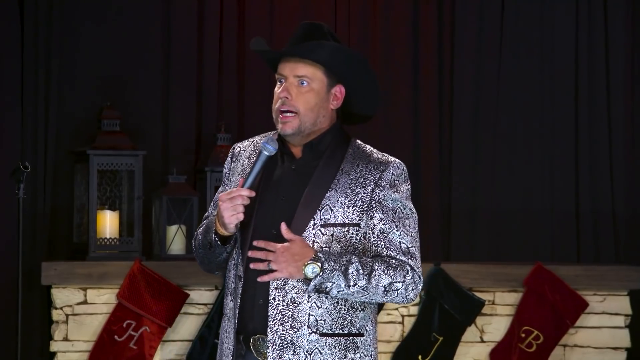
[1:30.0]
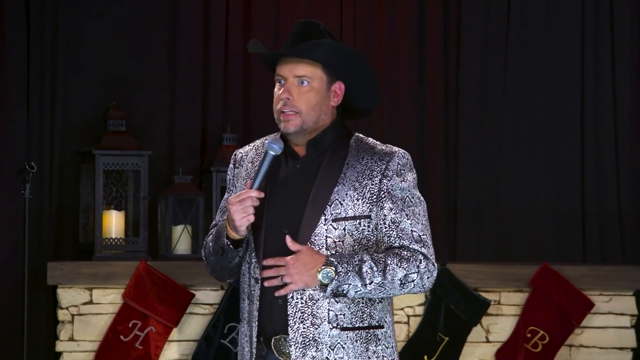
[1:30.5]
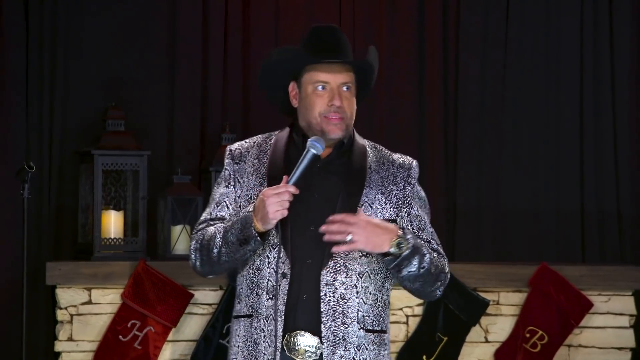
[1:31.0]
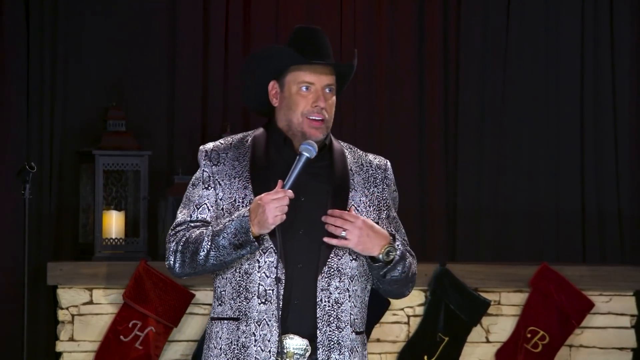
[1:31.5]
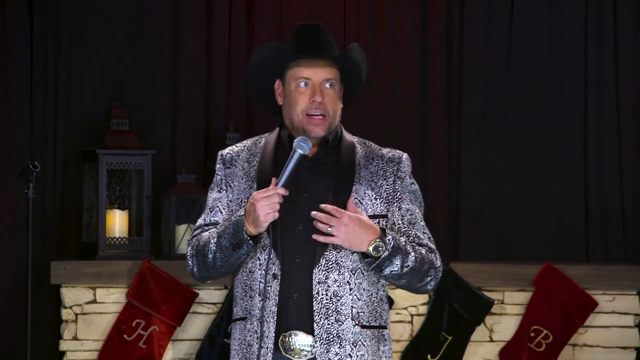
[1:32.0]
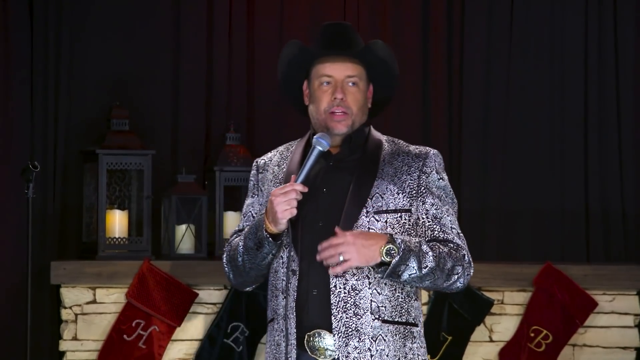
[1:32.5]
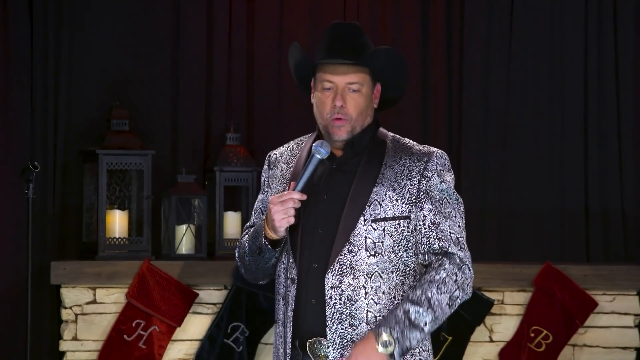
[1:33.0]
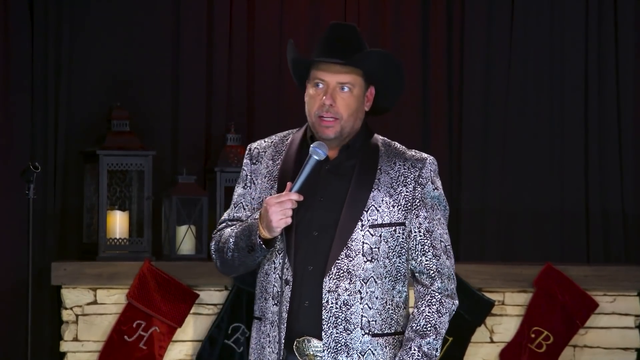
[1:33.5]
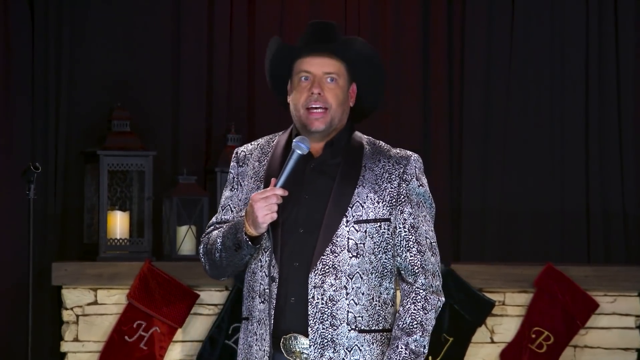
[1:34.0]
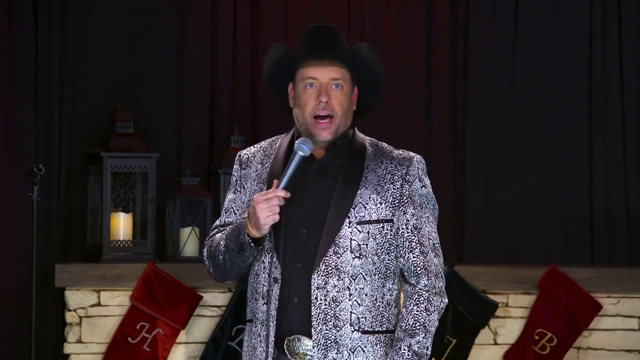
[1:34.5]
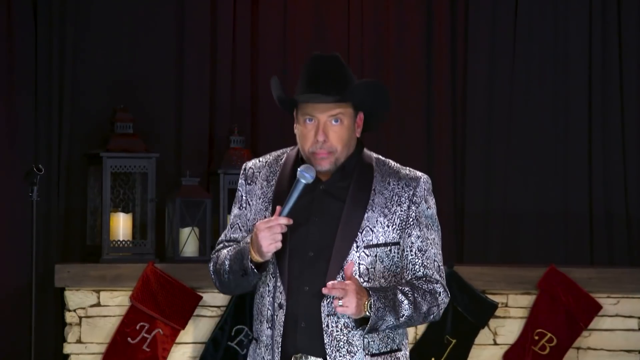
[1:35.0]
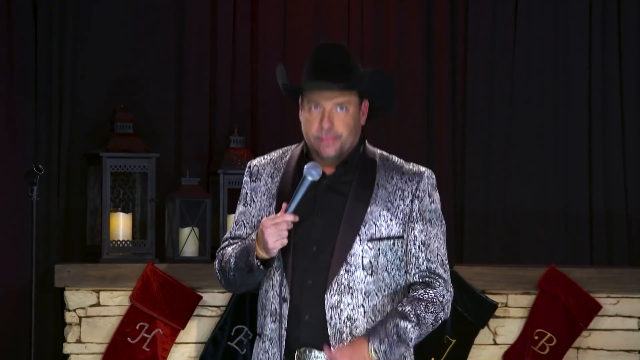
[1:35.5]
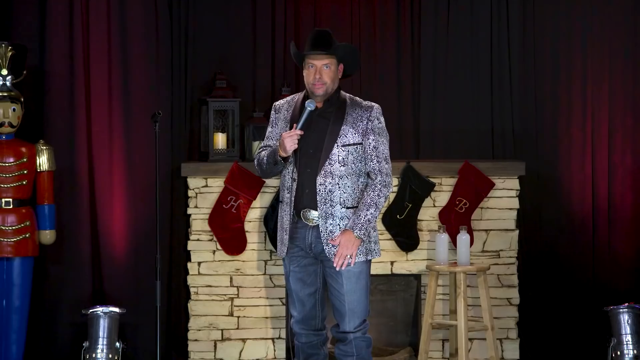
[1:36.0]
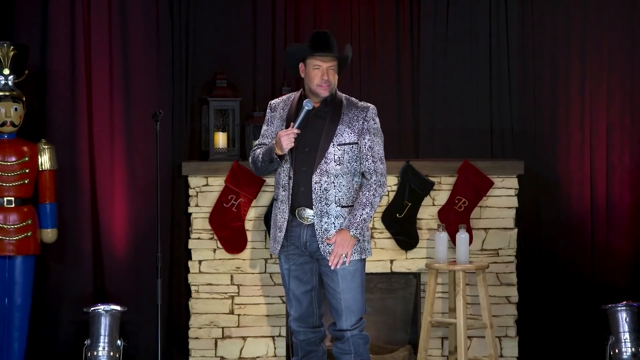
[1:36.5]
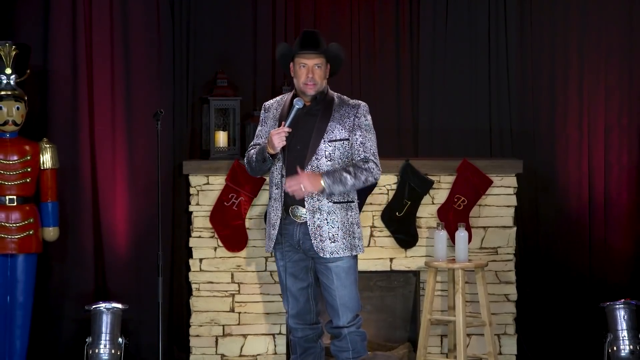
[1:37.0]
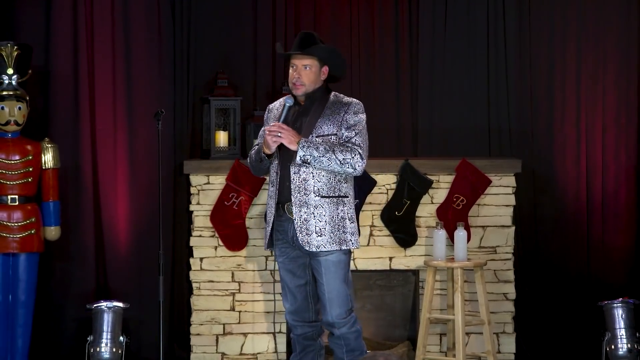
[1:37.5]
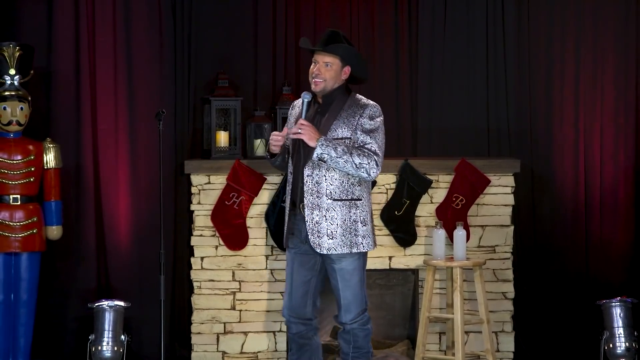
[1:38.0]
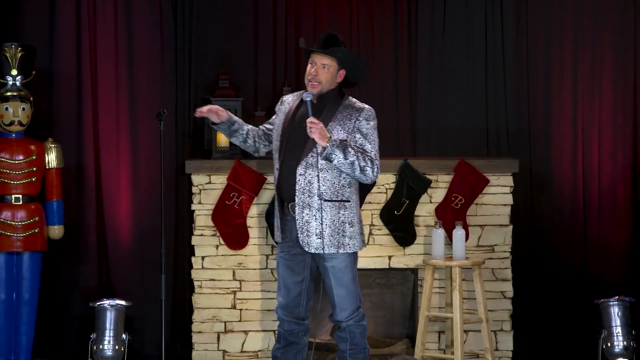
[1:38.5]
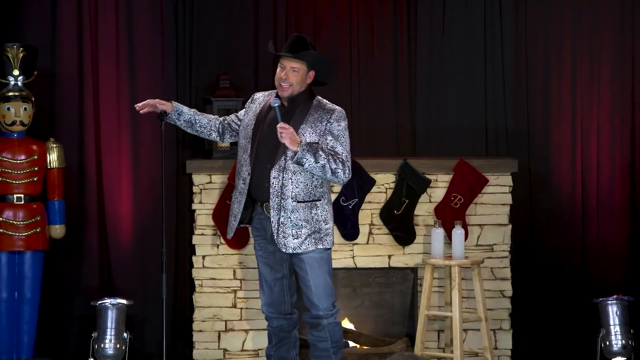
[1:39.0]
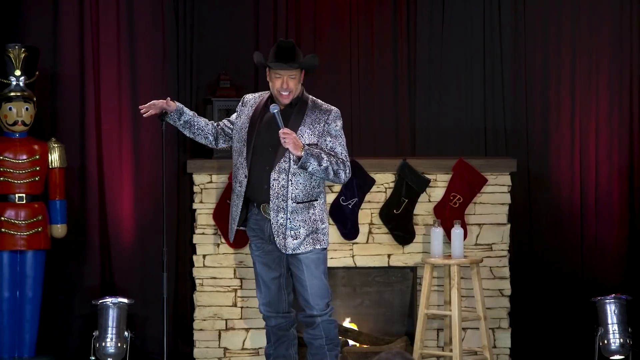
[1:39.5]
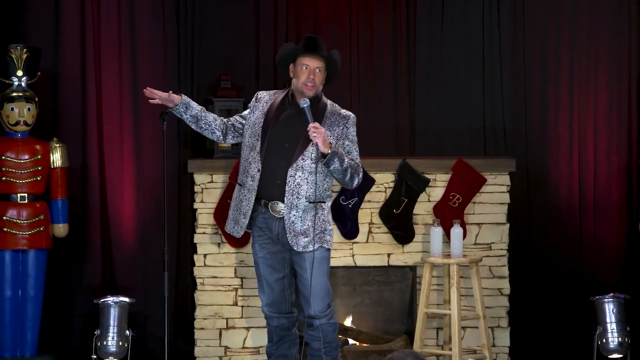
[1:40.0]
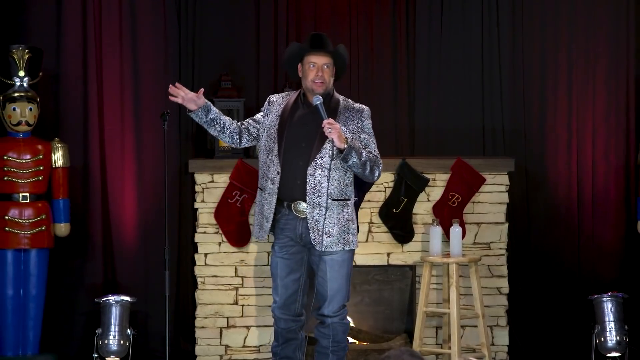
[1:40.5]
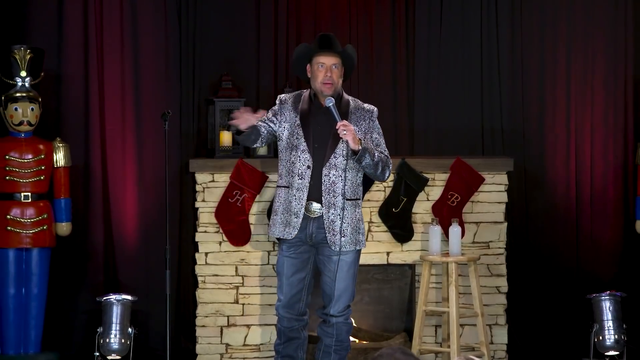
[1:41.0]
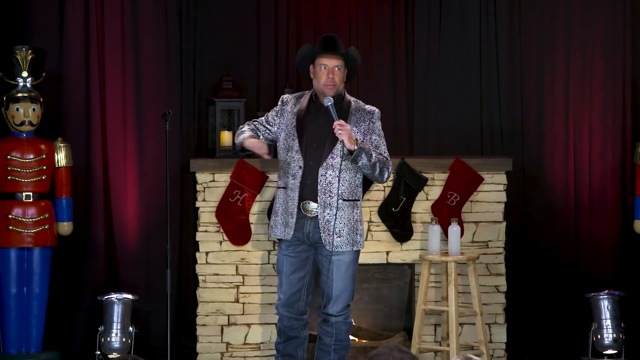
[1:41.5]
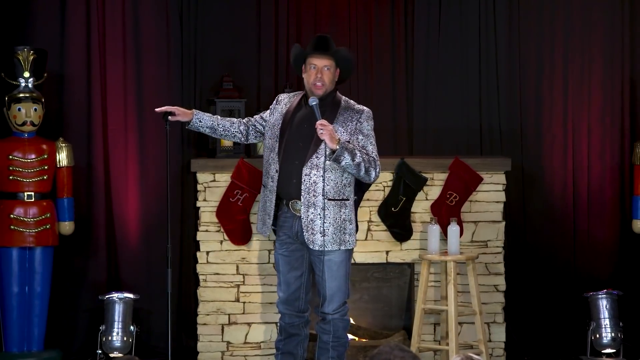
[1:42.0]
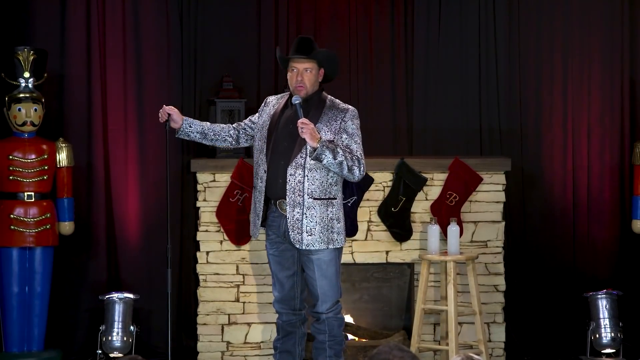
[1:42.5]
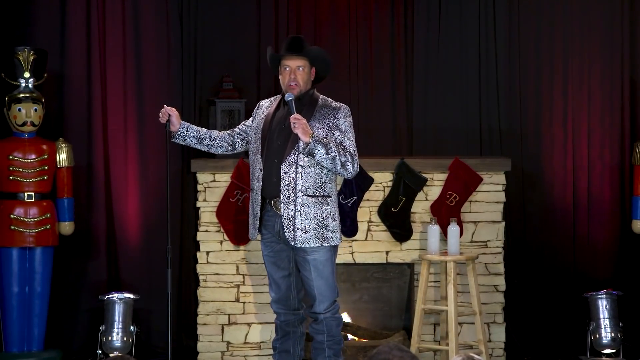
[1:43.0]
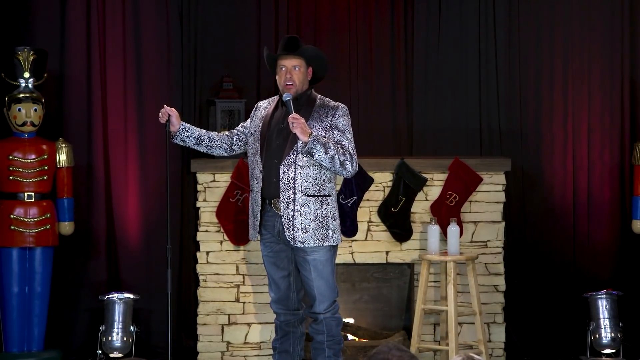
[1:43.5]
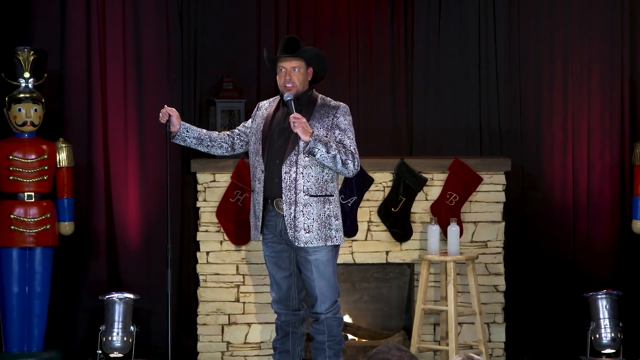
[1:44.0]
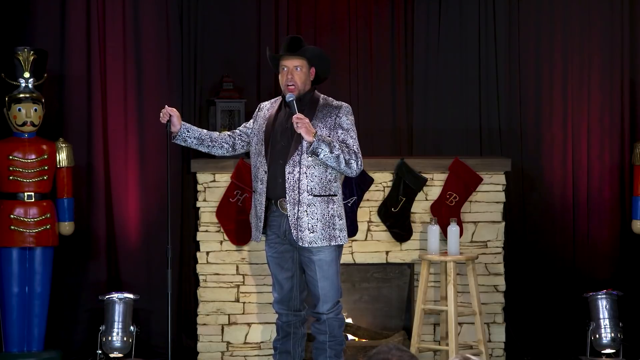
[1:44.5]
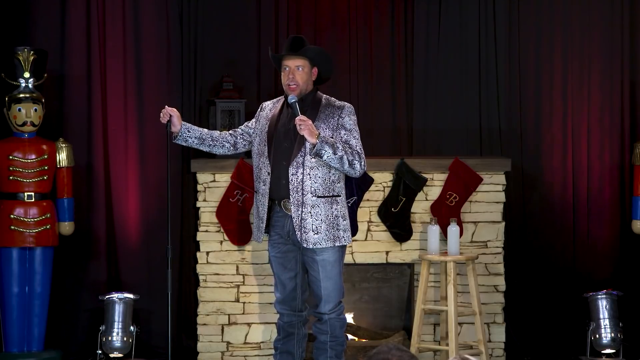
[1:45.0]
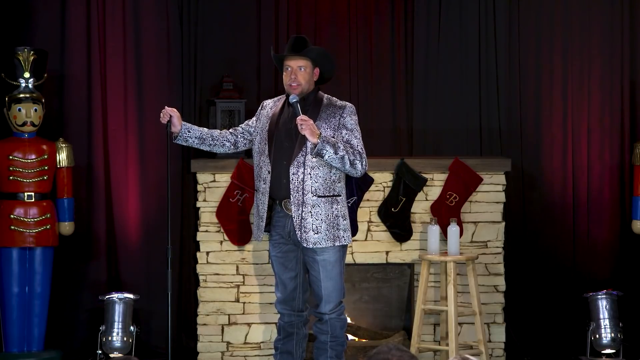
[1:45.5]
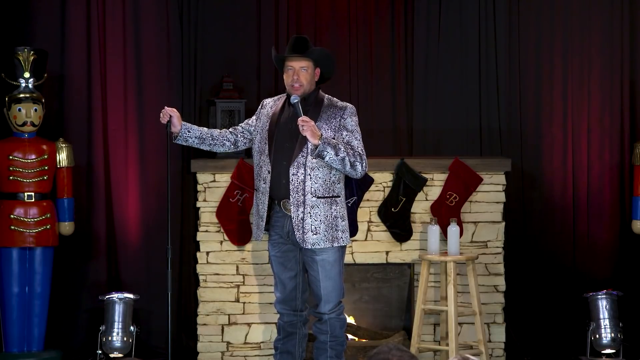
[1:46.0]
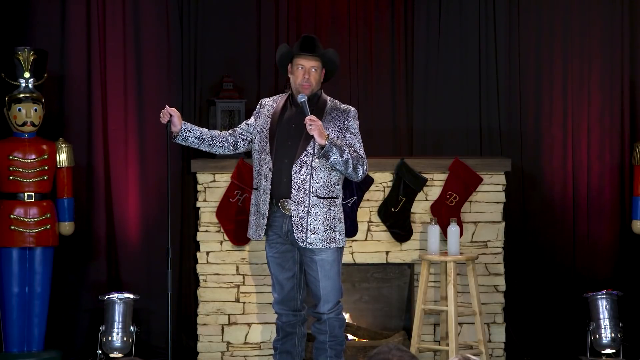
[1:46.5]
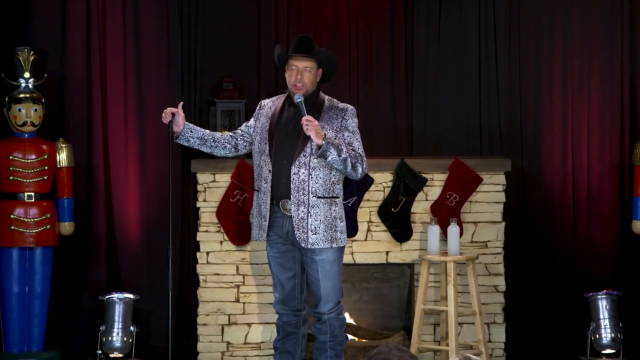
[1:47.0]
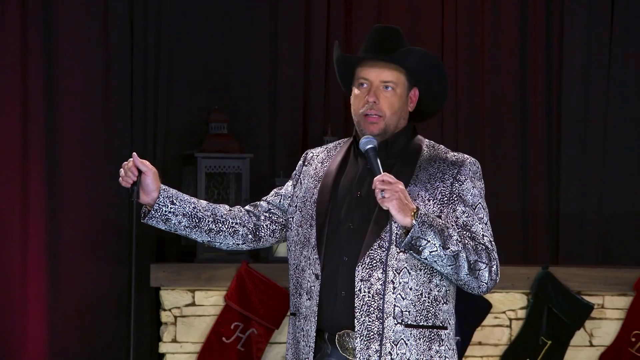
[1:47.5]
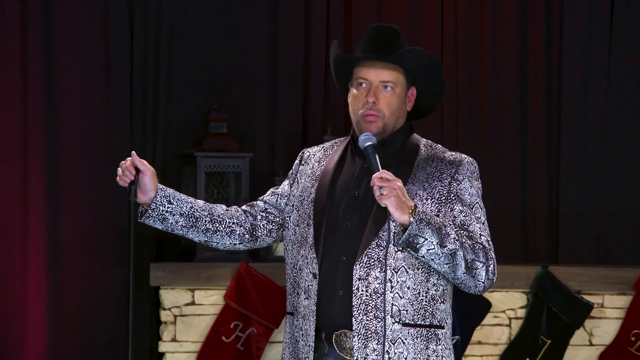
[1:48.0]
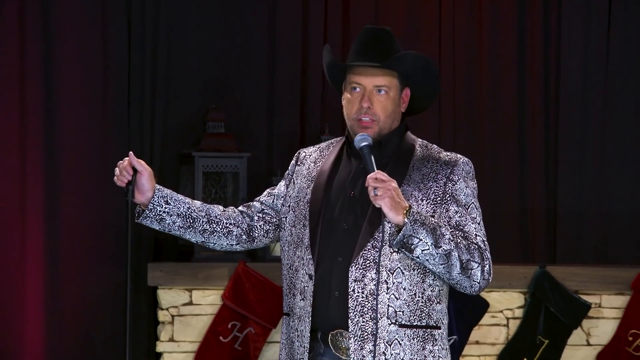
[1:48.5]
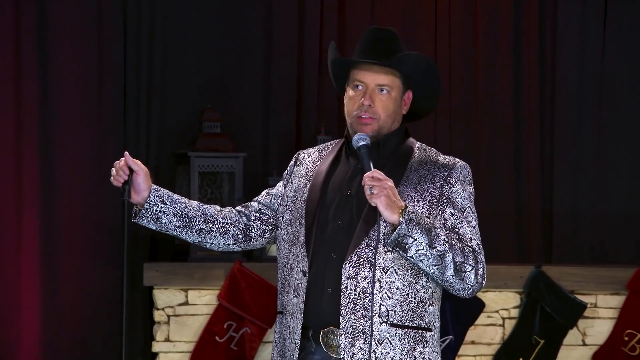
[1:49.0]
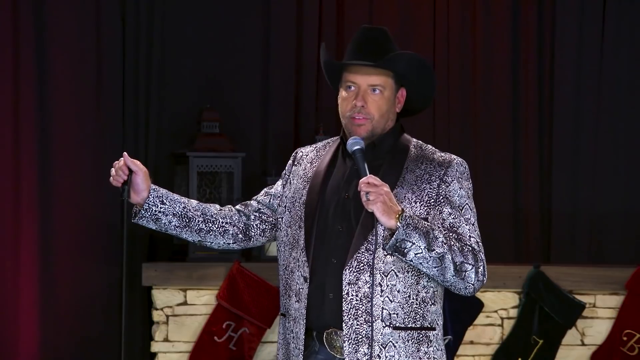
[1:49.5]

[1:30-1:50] The man goes back to the top of the stage near the fireplace and stands by the wooden statue, appearing to describe it in more detail. The statue appears to be a Chinese man who is happy and sad at the same time, and appears serious. It wears a black belt with a gold square on it, and its hands are made up of bells and cups. A stool nearby has two tall white water bottles on its round top. The stool has four tall legs and a leg in the middle that holds each pair of legs together.